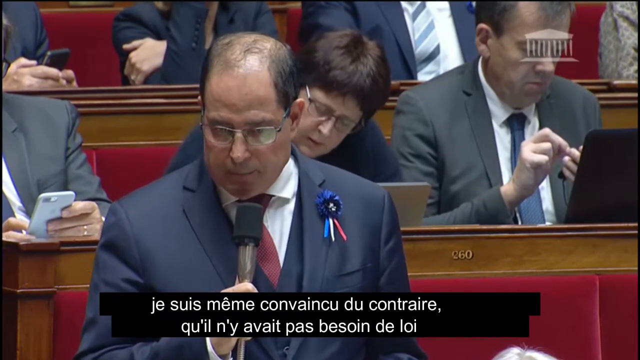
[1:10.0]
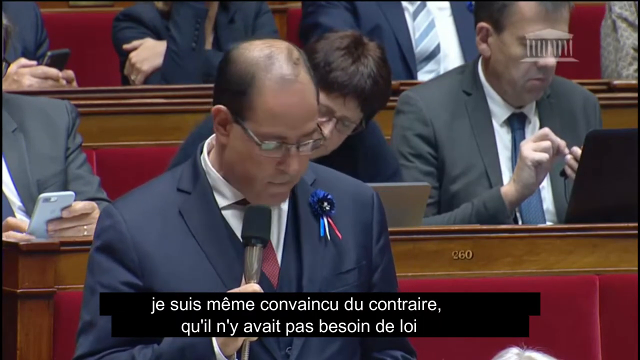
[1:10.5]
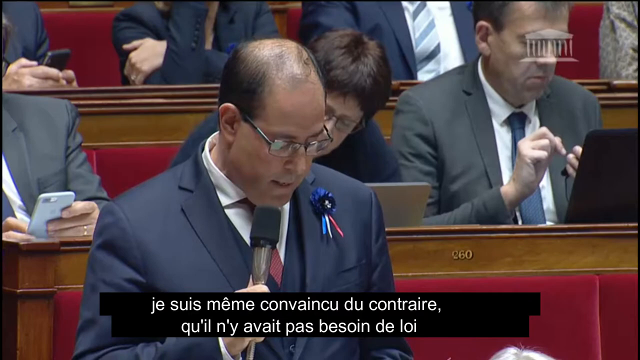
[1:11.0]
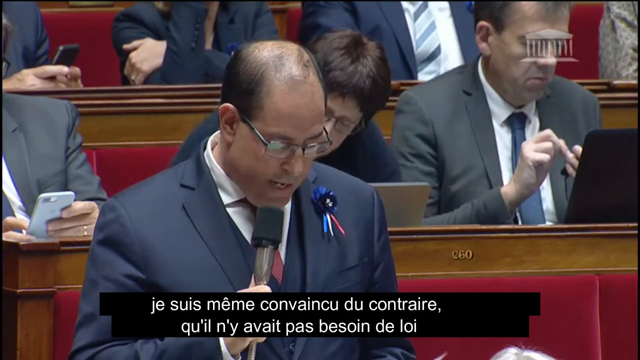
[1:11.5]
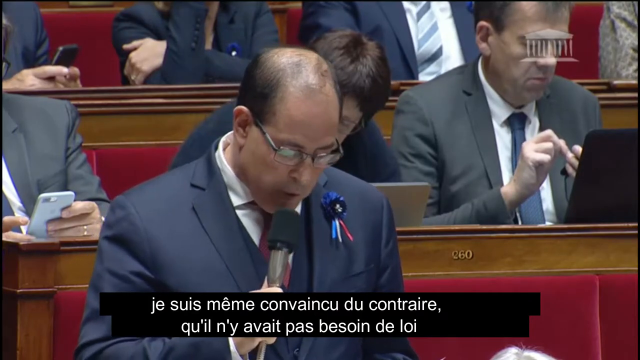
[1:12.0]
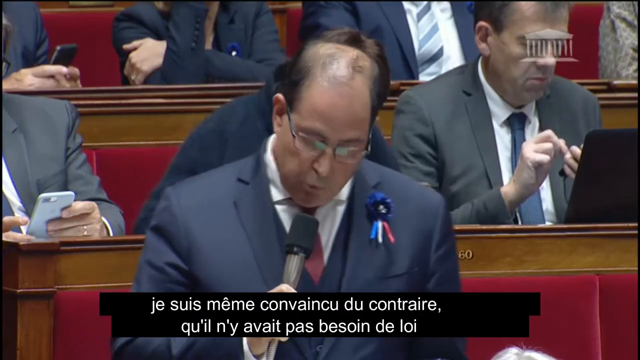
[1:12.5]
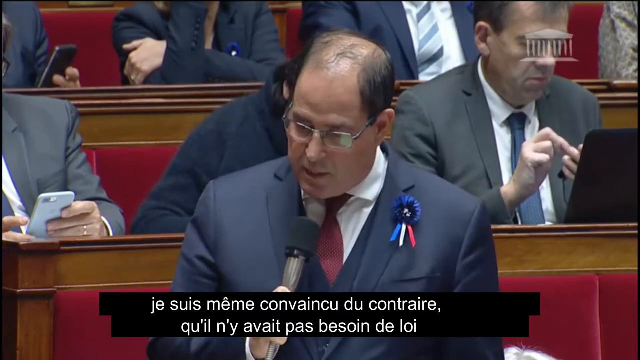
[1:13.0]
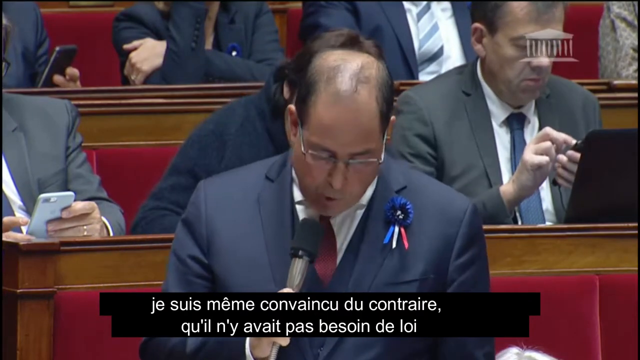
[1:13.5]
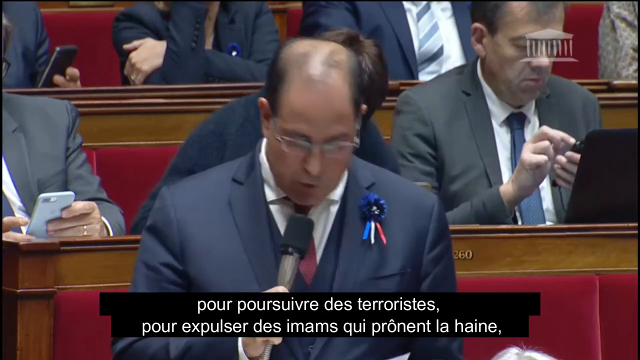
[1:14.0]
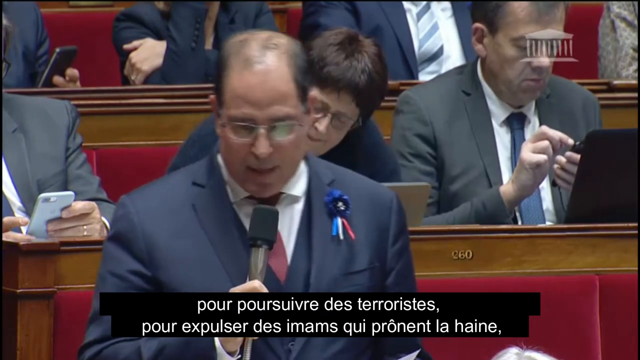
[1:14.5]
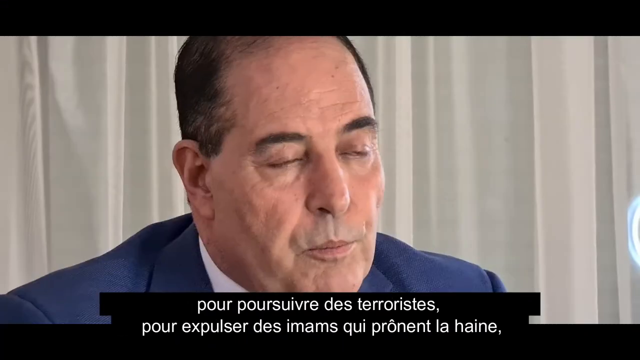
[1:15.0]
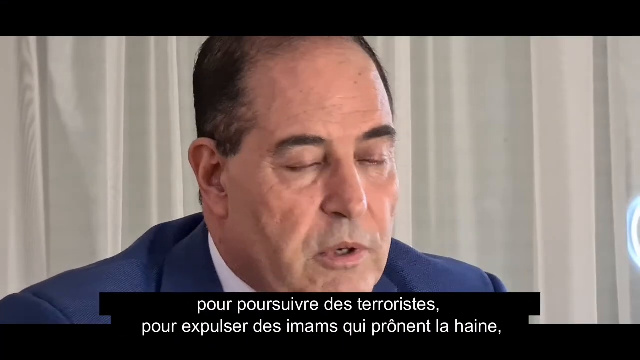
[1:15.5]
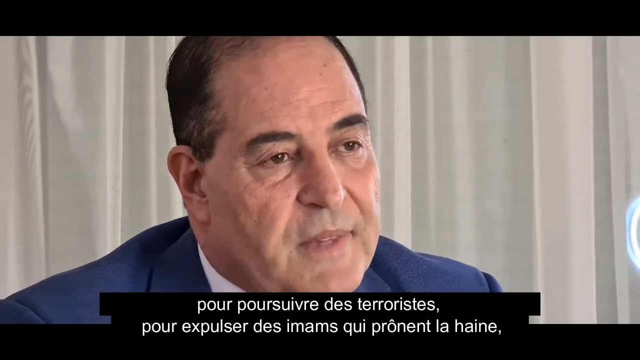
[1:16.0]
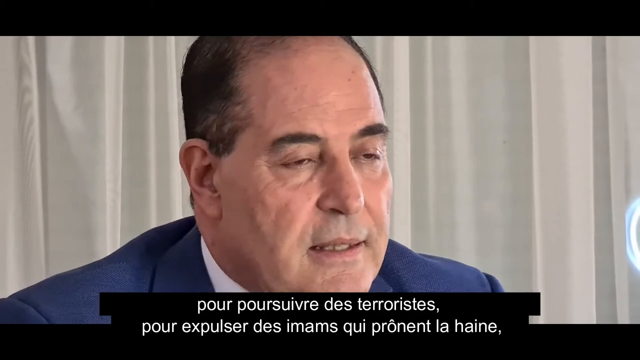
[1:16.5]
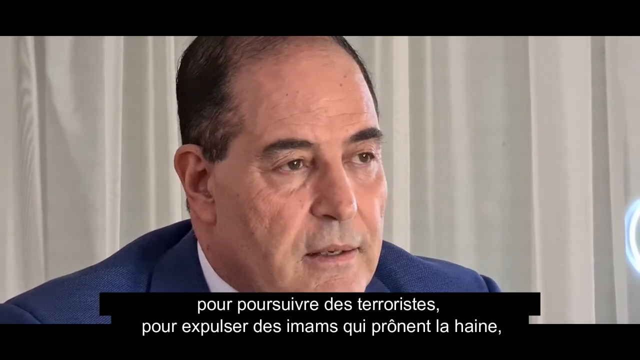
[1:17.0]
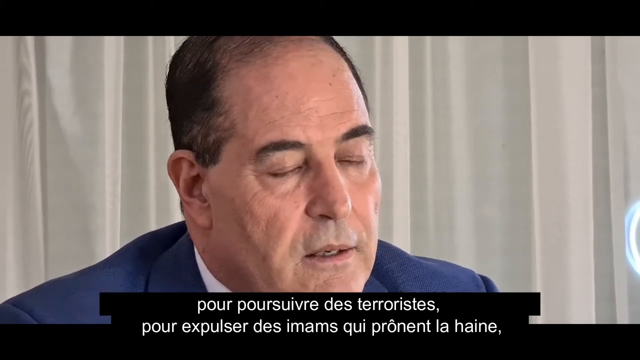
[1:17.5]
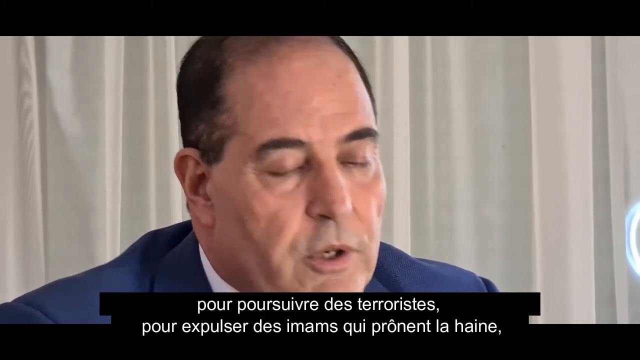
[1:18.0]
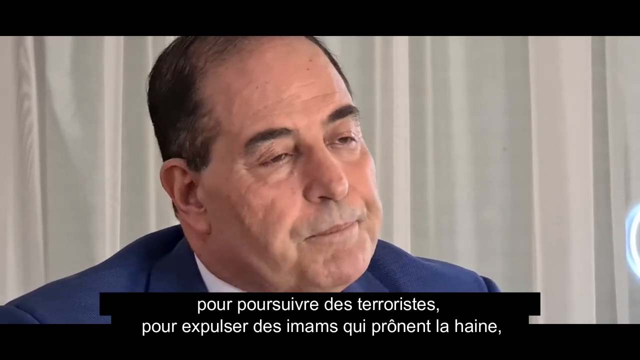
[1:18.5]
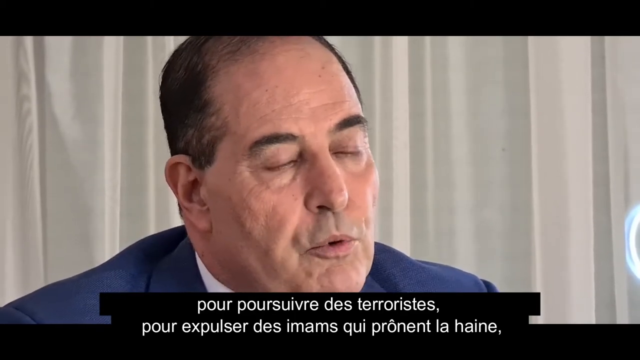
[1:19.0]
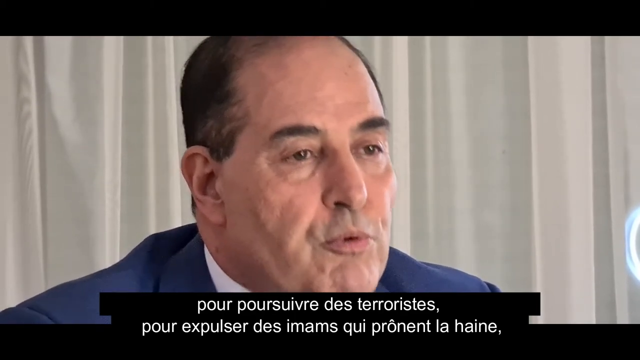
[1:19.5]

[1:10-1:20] The man continues speaking inside the parliament- or congress-type room. Many people are visible, with some sitting in the background and two rows of people visible behind. On the right, a man is on his cell phone with a laptop in front of him. To the left, another person who appears to be a man, his face not visible, is also on his cell phone. The scene then shifts back to the man sitting in his blue suit, the camera zoomed in close to his face, as captions in a foreign language appear at the bottom.